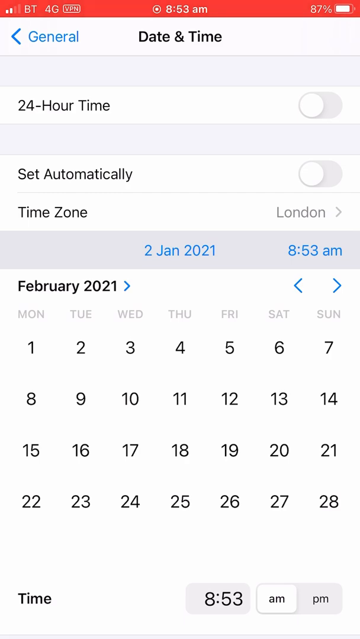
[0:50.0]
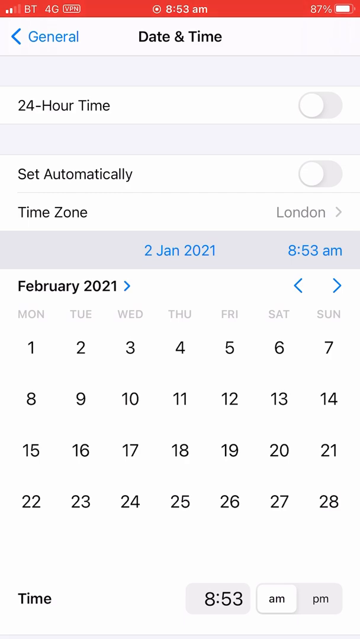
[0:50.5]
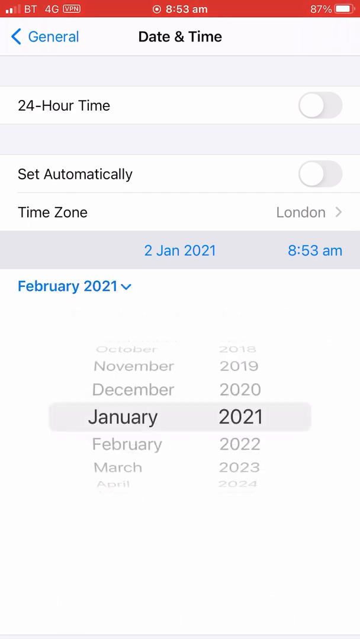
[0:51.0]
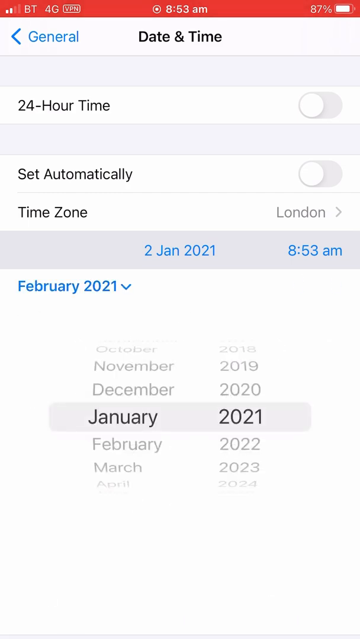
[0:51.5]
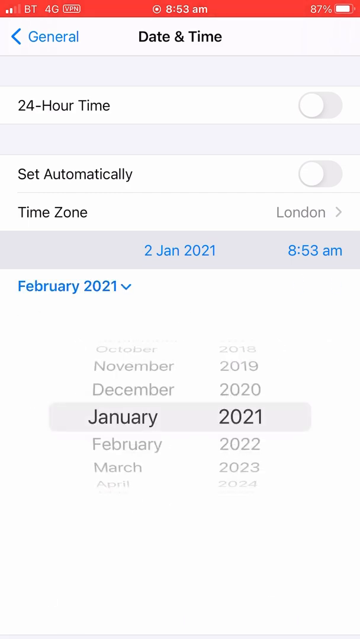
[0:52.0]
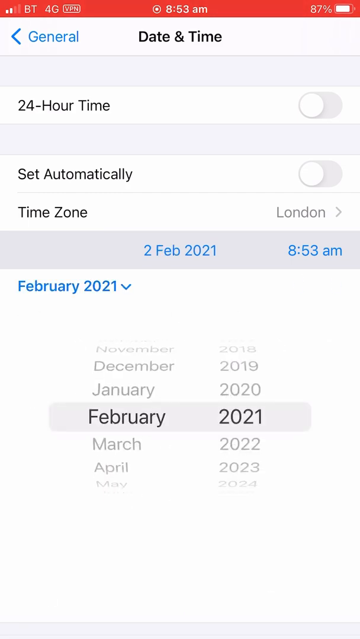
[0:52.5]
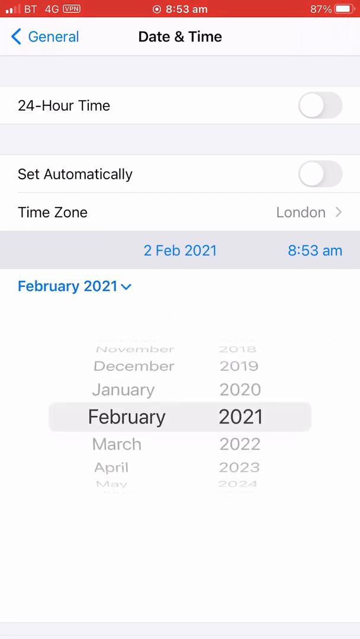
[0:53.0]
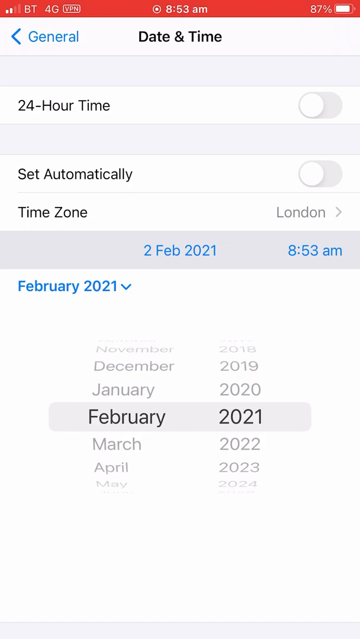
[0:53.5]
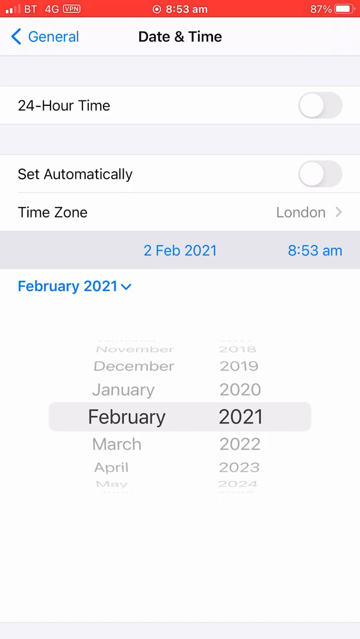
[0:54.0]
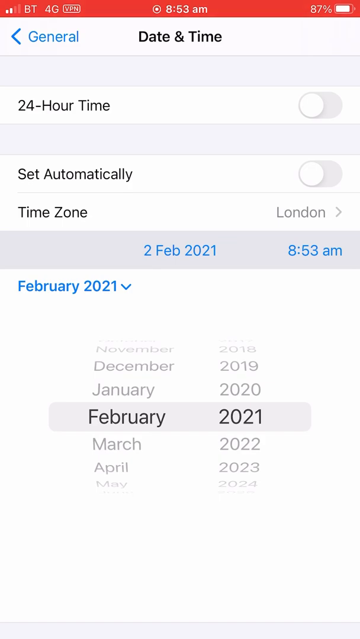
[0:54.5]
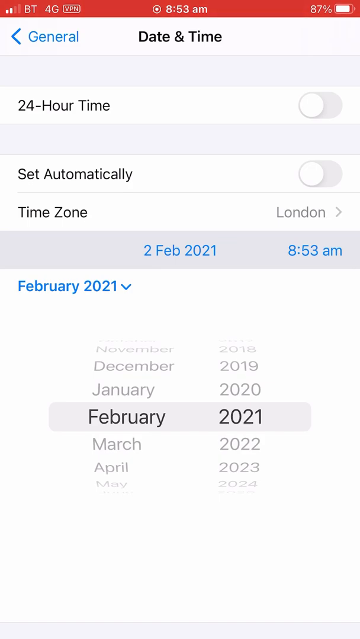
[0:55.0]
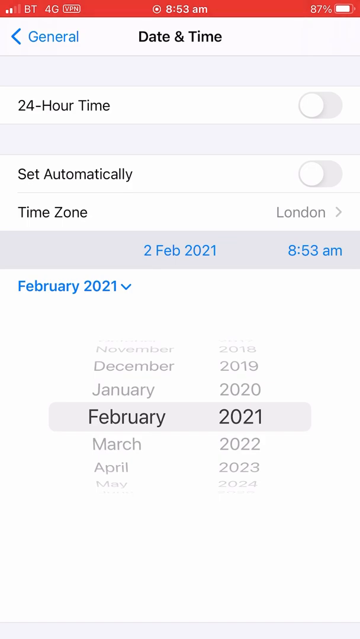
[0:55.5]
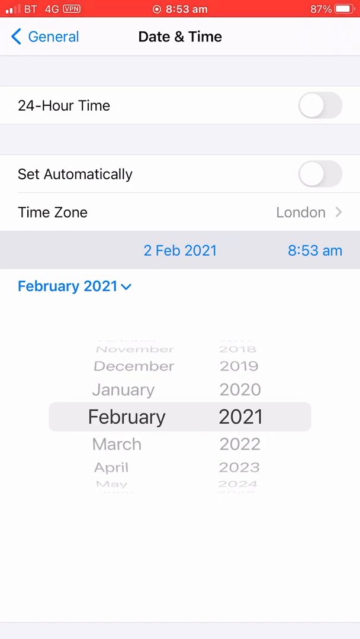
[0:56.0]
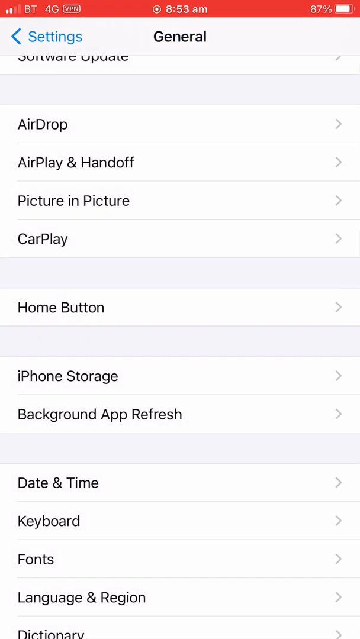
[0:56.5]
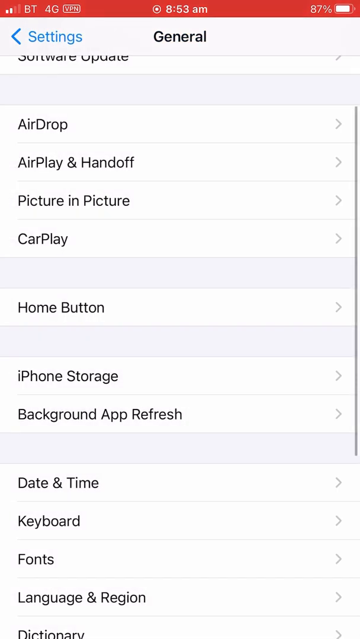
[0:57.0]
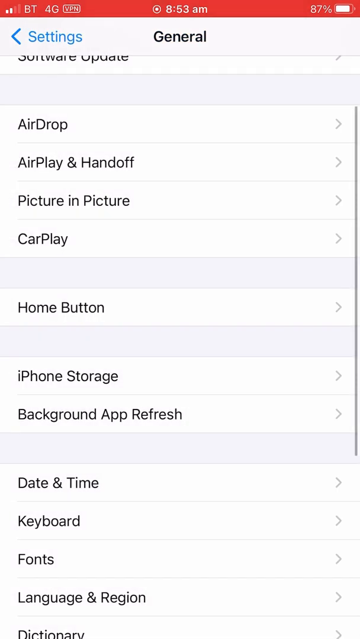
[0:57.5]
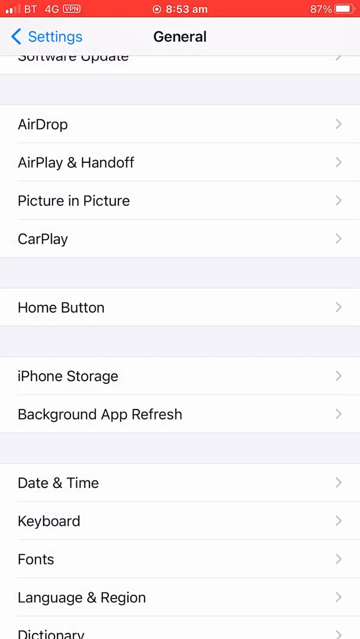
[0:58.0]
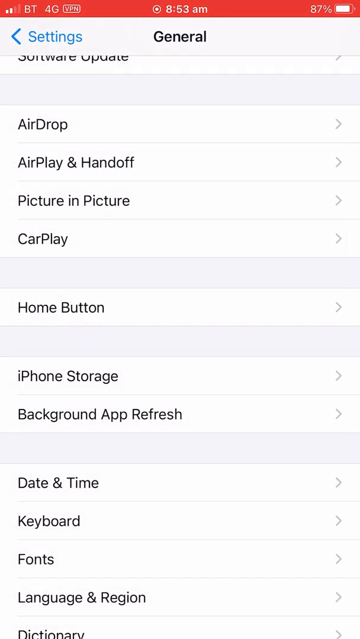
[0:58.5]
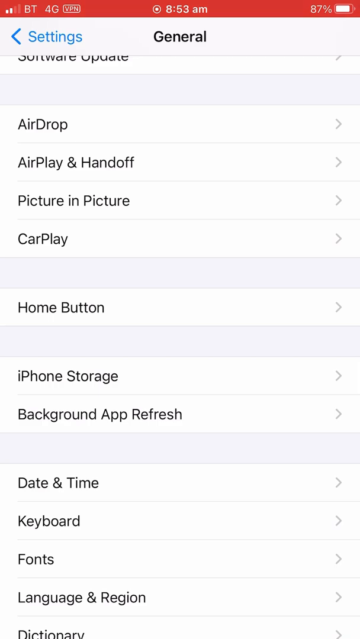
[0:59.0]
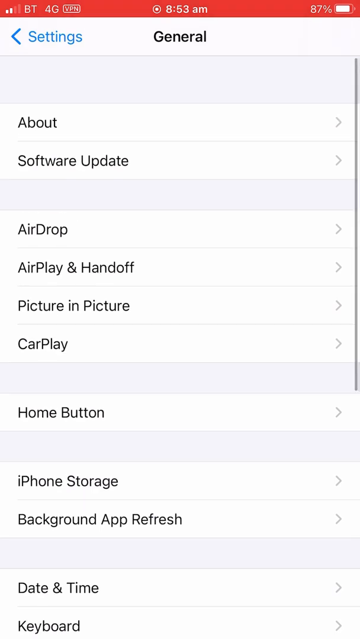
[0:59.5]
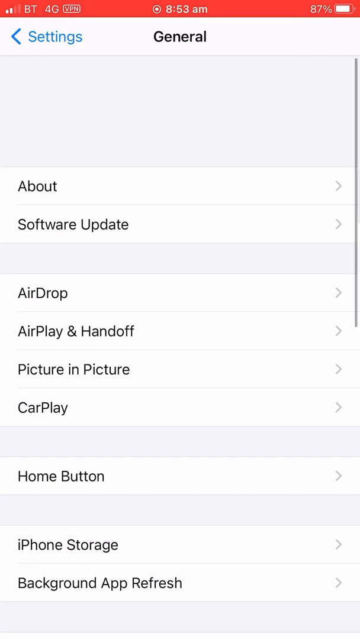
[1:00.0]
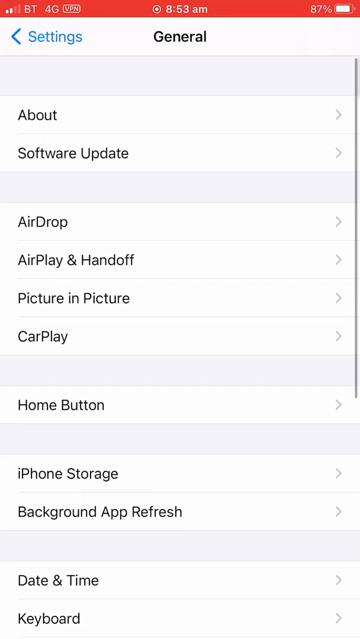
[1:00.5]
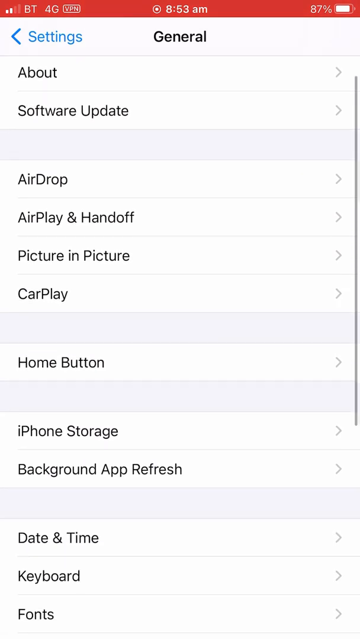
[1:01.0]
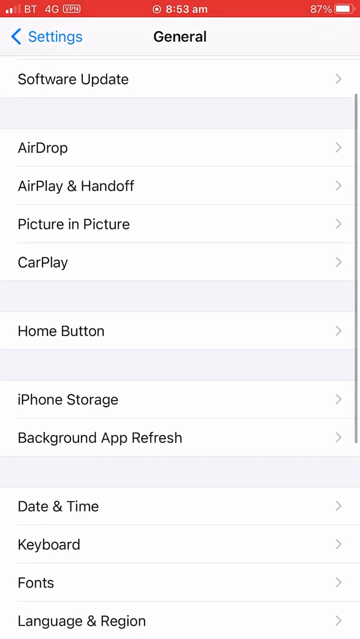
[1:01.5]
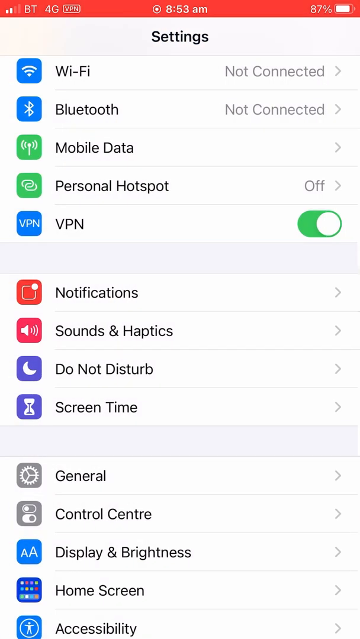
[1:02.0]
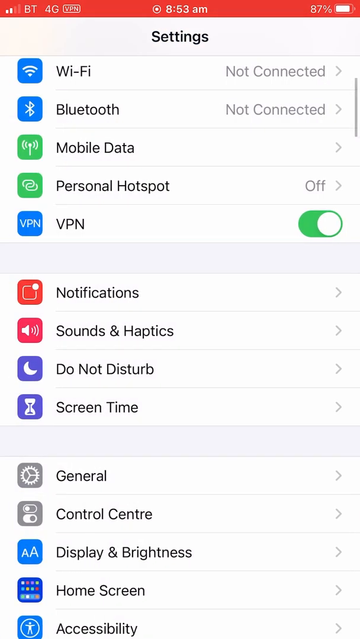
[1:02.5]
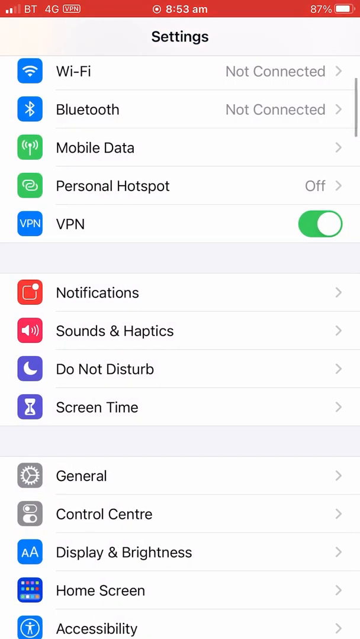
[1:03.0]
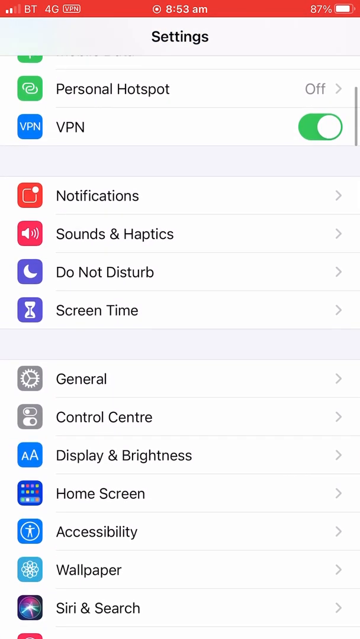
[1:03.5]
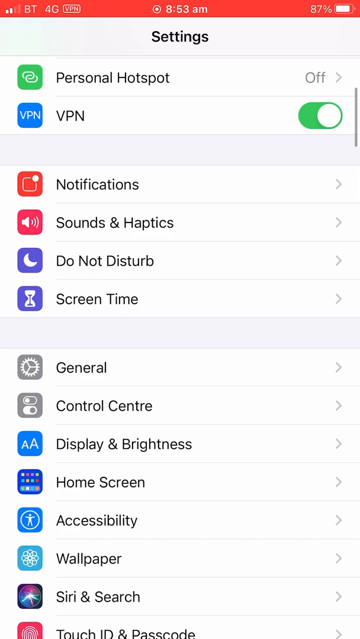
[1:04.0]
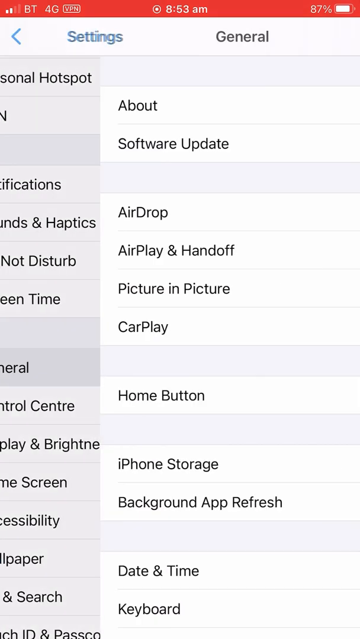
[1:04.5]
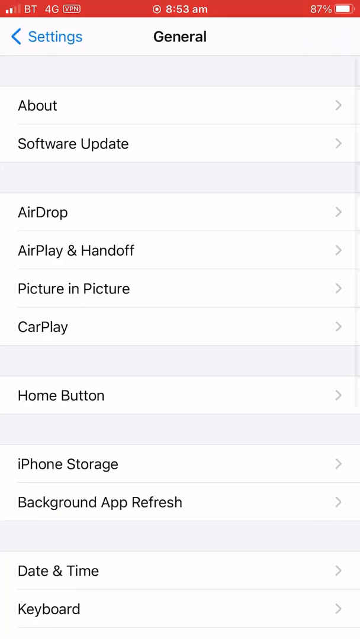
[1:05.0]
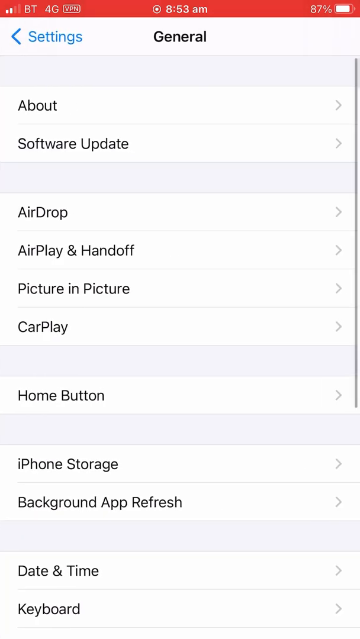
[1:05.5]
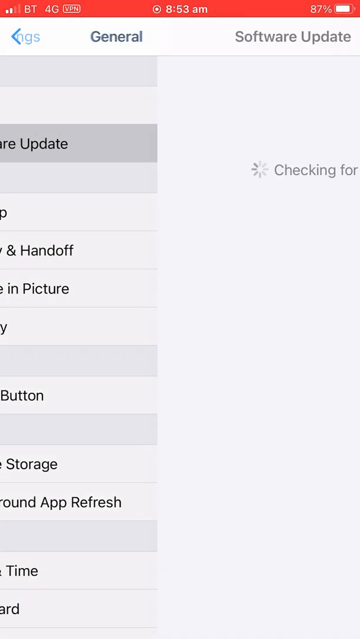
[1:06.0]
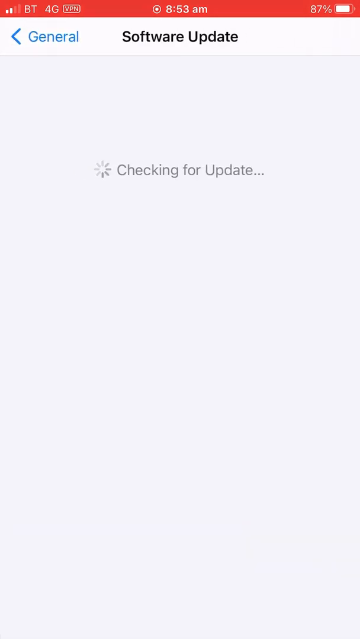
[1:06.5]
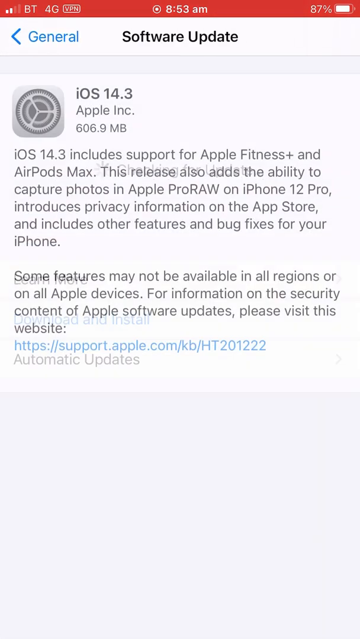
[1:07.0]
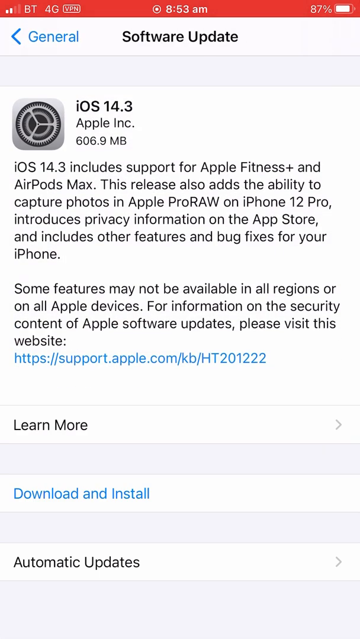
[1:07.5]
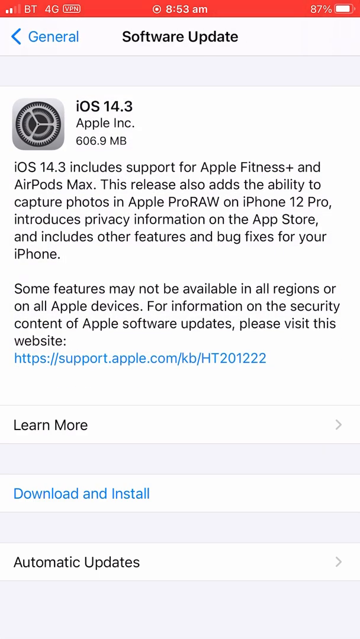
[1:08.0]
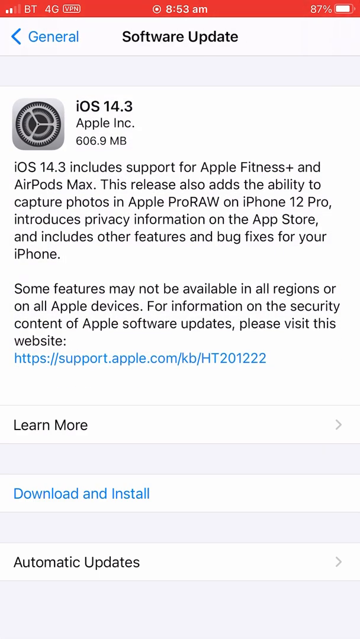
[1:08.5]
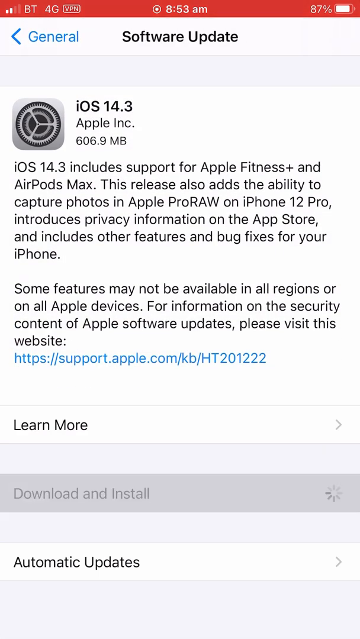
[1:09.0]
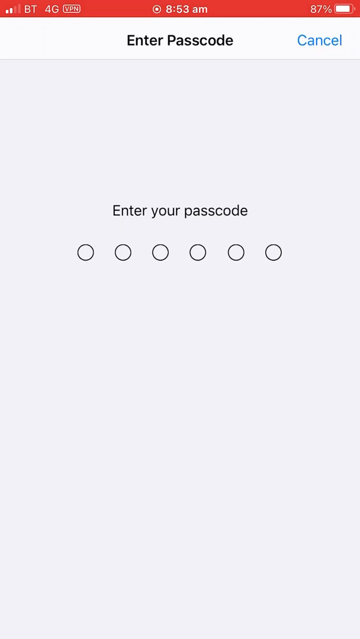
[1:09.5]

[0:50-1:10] The time zone settings are shown again, and the person sets the time and date manually. He goes to the date and sets it to 2nd February 2021, leaving the time unchanged. He then goes into Settings, General and Software Update again, and this time the update can be done without a Wi-Fi connection, using only the SIM card's connection. Only the phone screen is shown; the person is never seen.